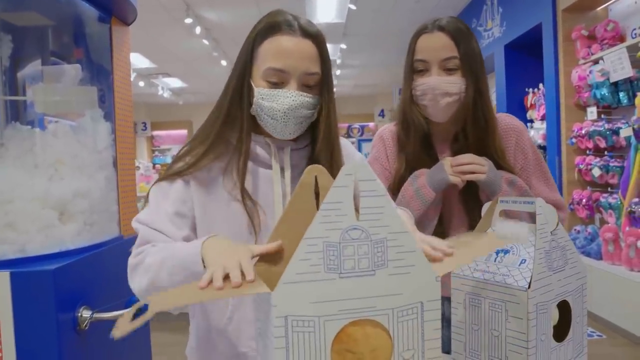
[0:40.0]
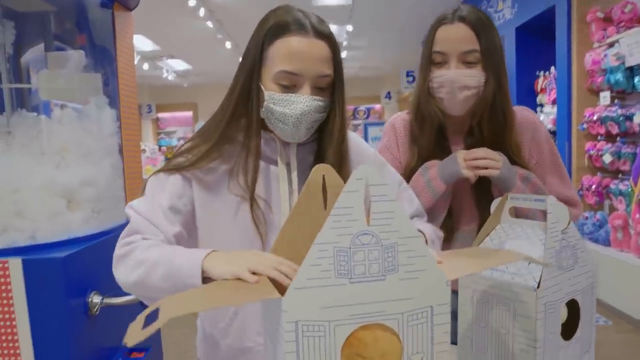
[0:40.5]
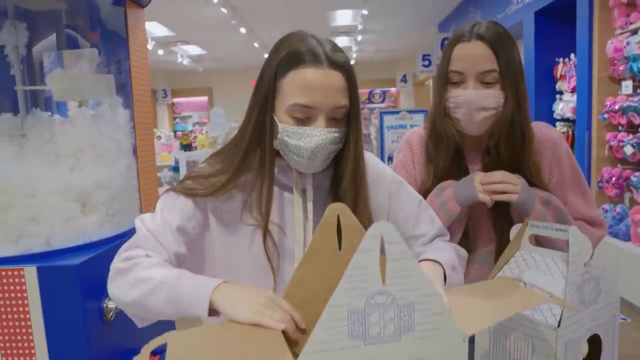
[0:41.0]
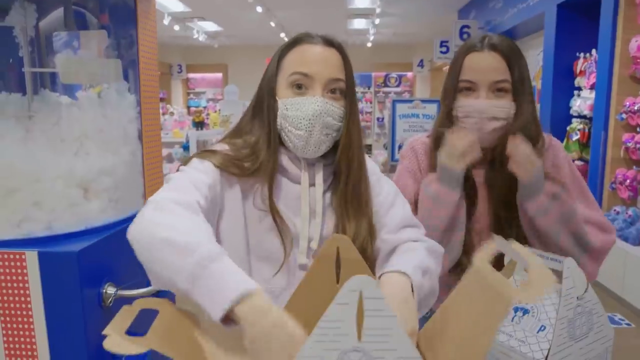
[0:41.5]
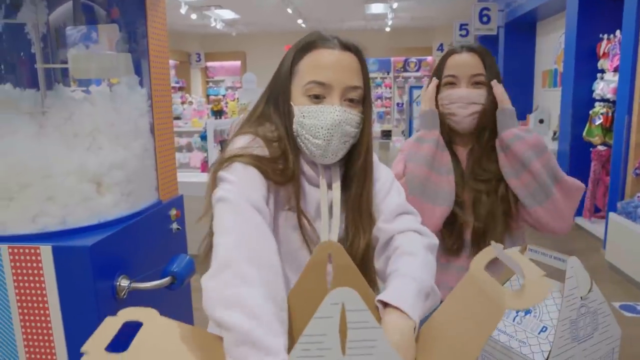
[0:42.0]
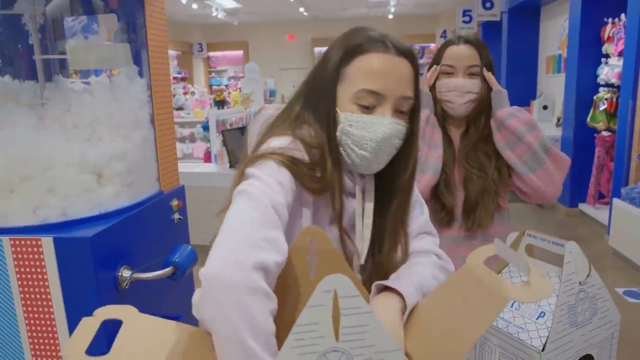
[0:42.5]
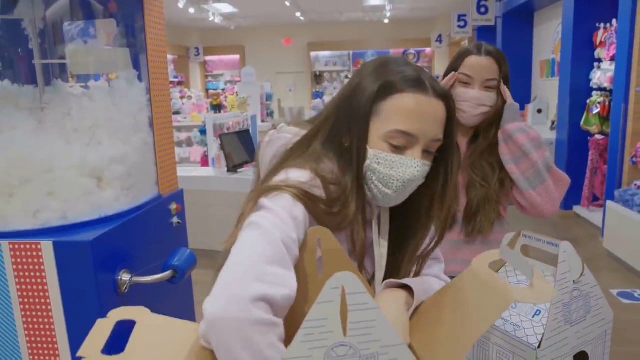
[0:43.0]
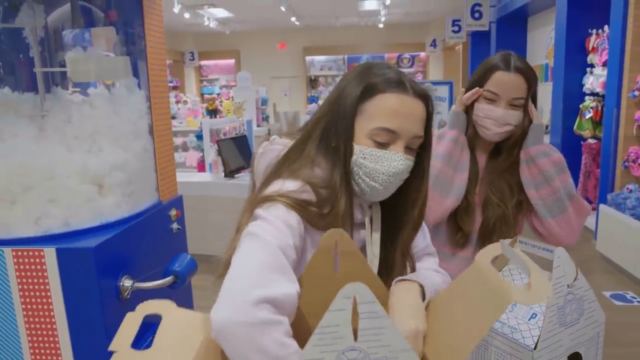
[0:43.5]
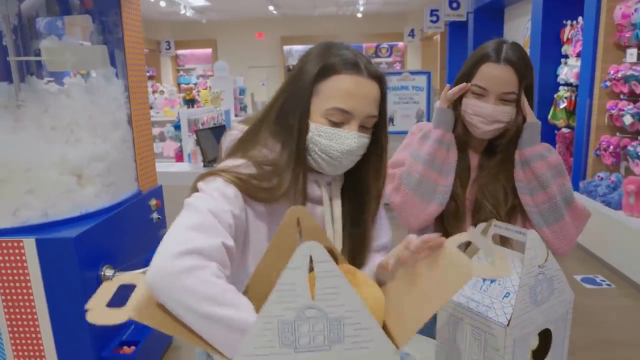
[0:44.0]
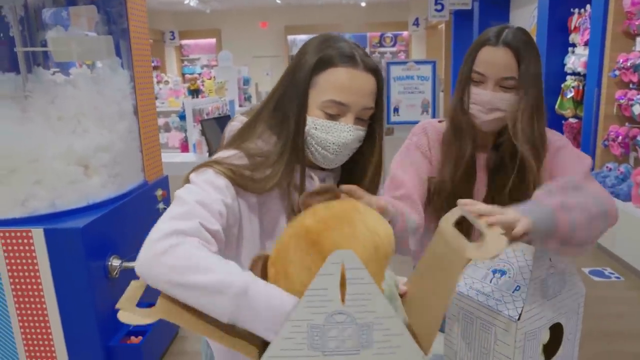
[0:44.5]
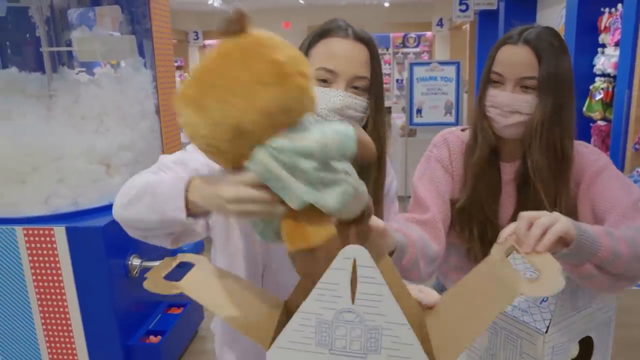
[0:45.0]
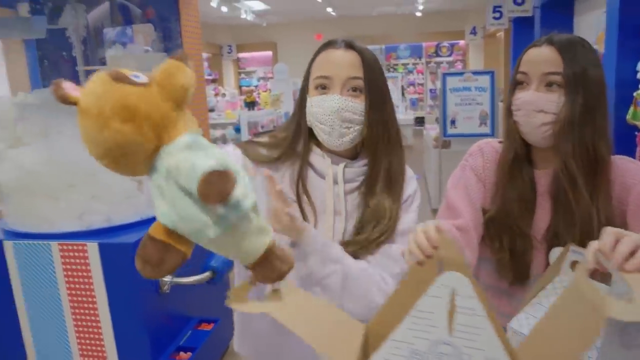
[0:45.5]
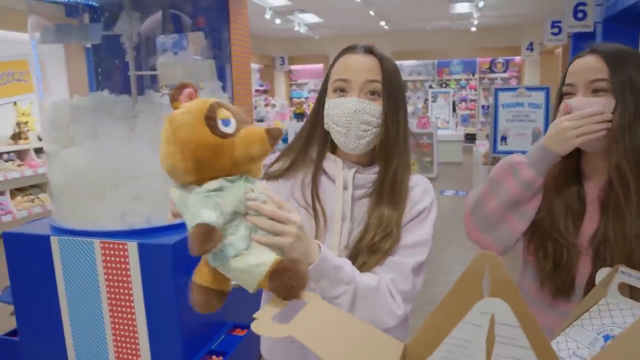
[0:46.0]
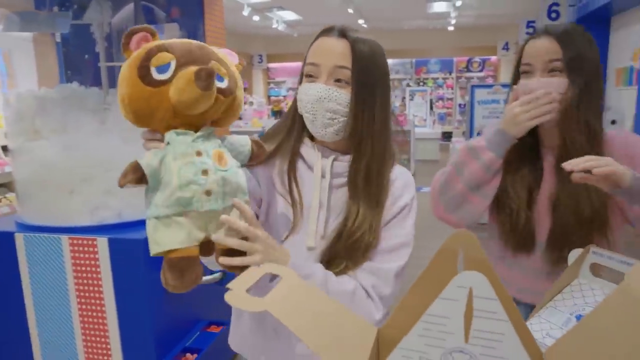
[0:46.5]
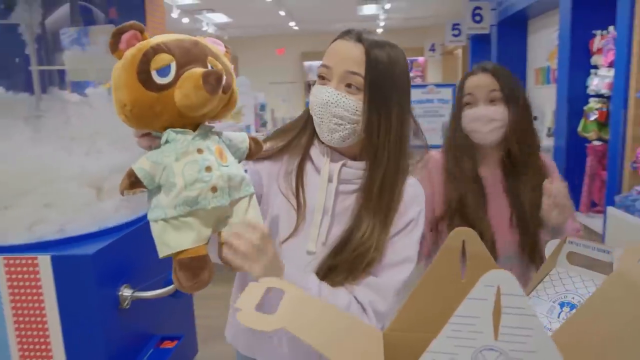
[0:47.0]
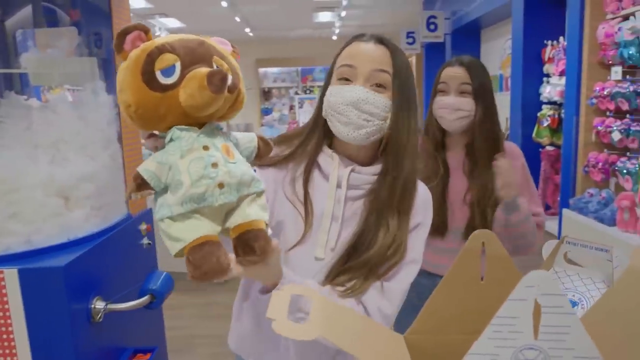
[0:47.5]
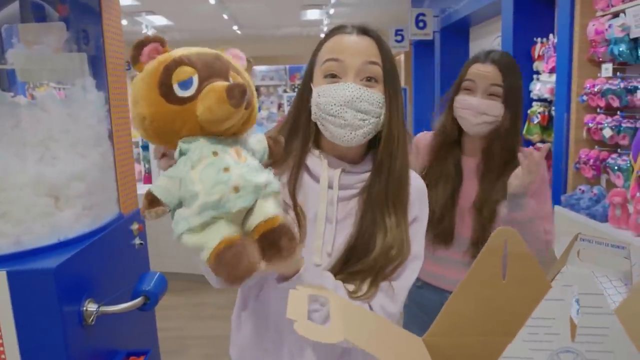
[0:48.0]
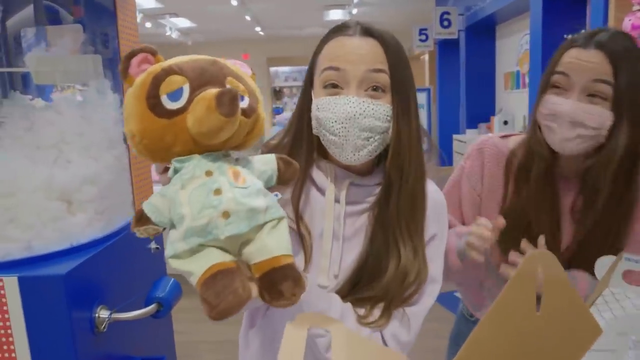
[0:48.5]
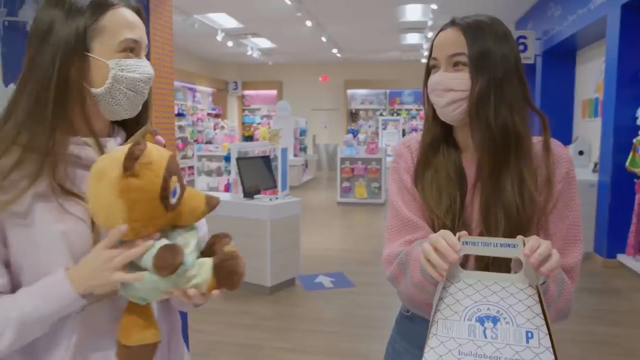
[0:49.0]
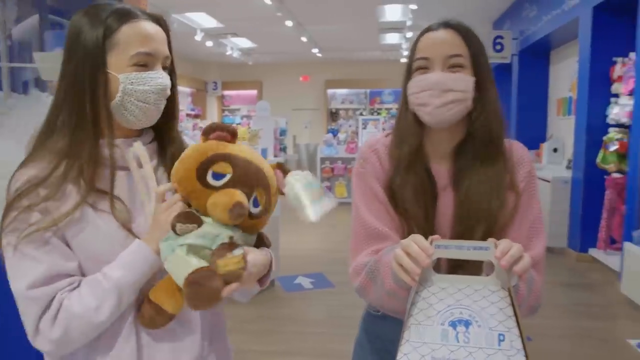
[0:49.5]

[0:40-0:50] The woman on the left opens the decorated carton and removes a yellow teddy bear that is wearing clothes like a human. The woman on the right claps her hands happily. Behind them is a very big room full of decoration, with stands marked 1, 2, 3, 4, 5 and 6. There are two well-decorated cartons with some features written on them in a pencil-like way. Beside them is what looks like a shop selling teddy bears, children's wares and babies' goodies. The women touch the boxes, remove the teddy bear and clap together, very excited.